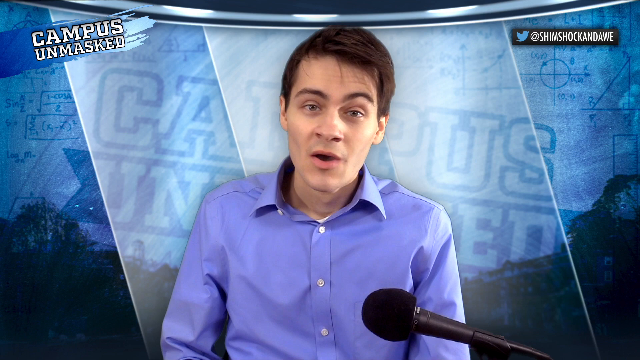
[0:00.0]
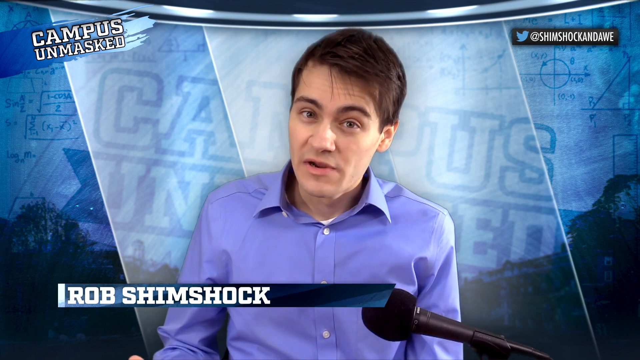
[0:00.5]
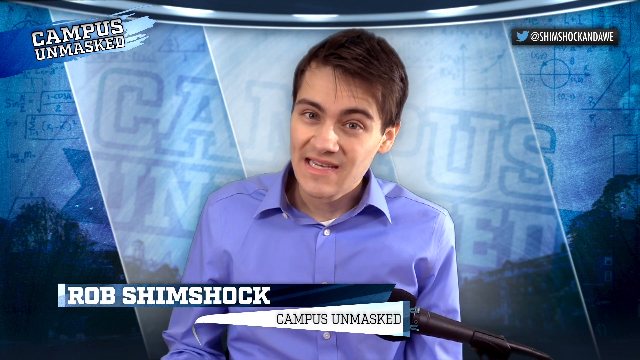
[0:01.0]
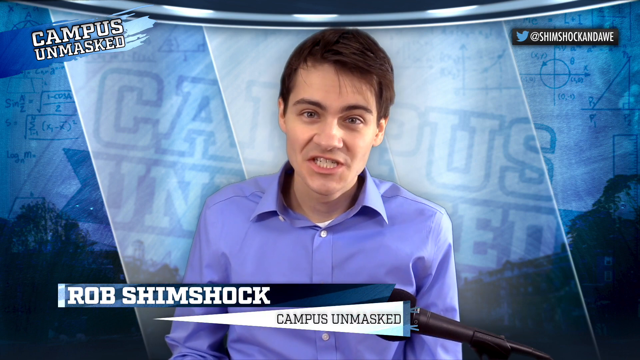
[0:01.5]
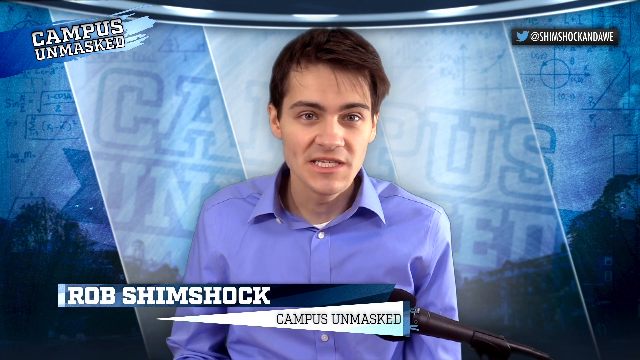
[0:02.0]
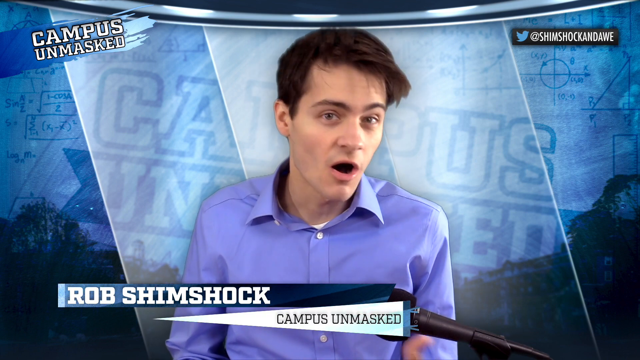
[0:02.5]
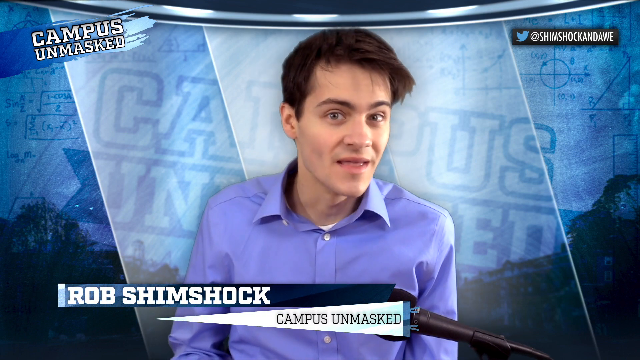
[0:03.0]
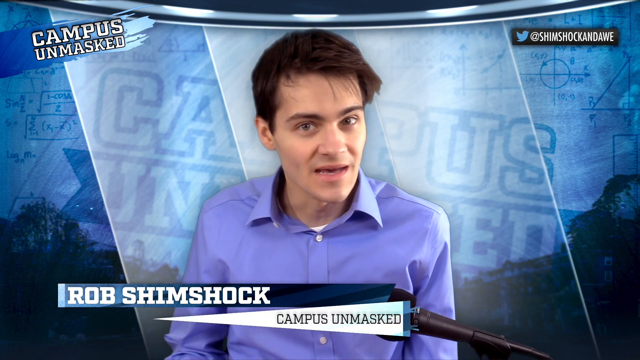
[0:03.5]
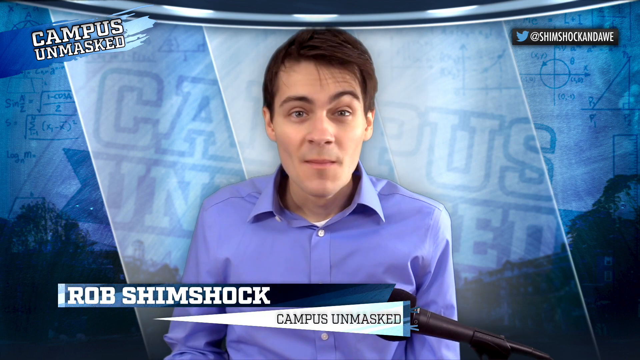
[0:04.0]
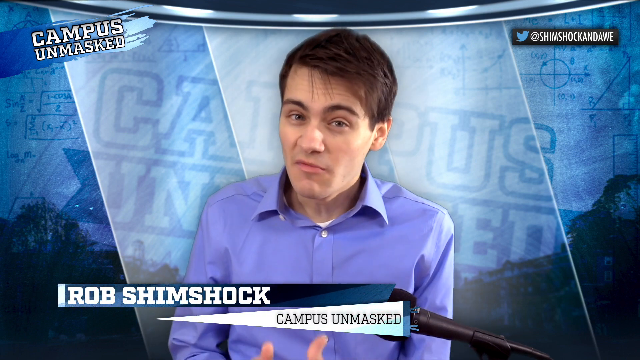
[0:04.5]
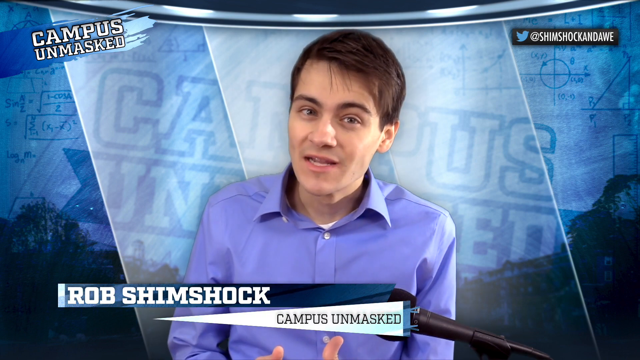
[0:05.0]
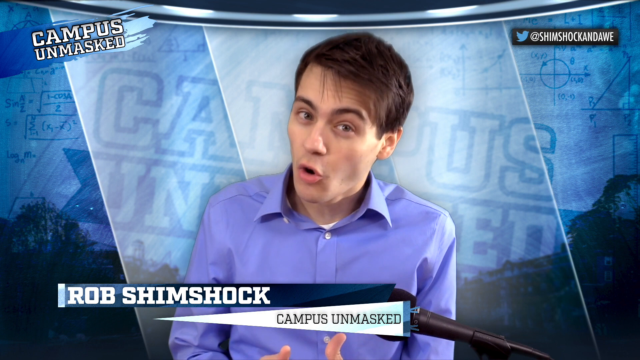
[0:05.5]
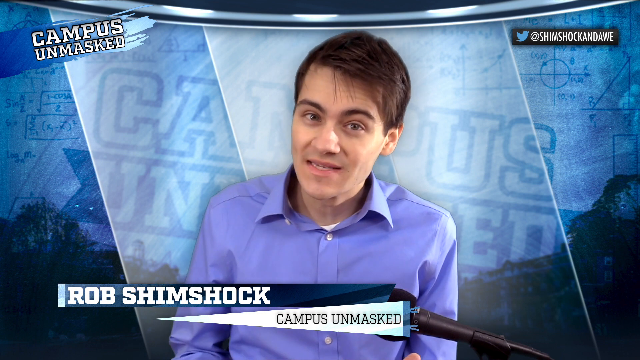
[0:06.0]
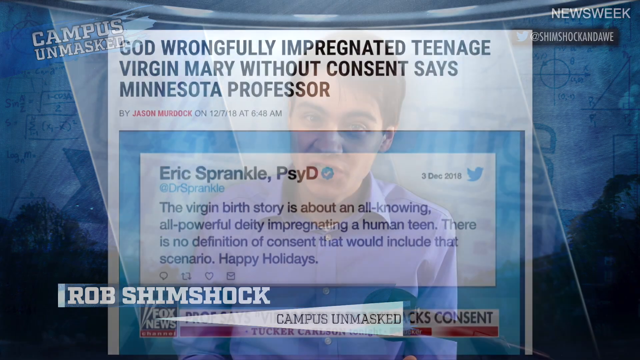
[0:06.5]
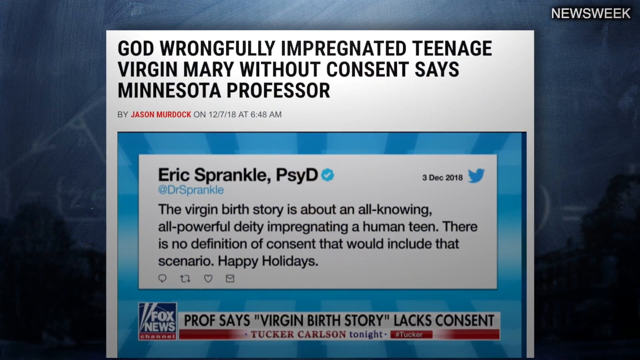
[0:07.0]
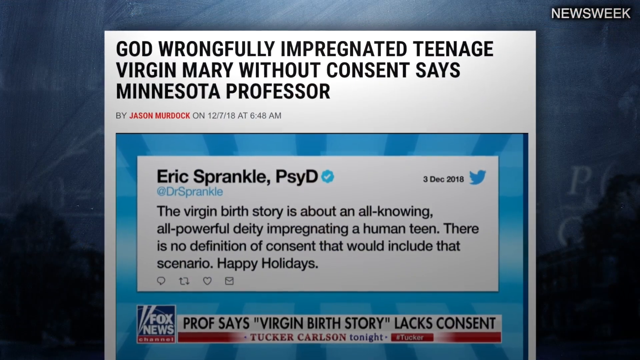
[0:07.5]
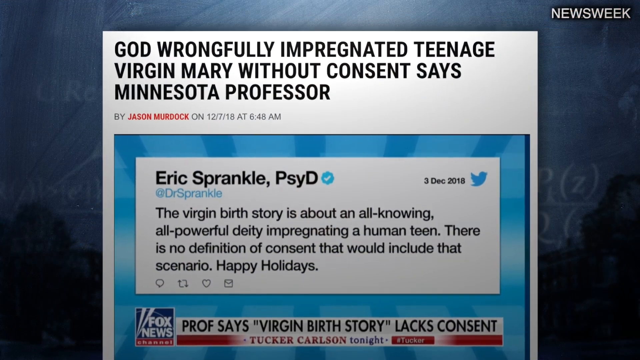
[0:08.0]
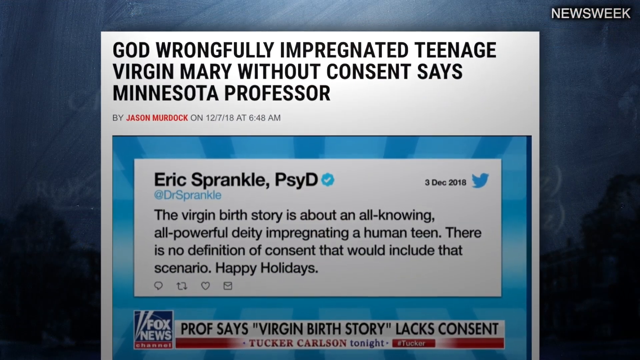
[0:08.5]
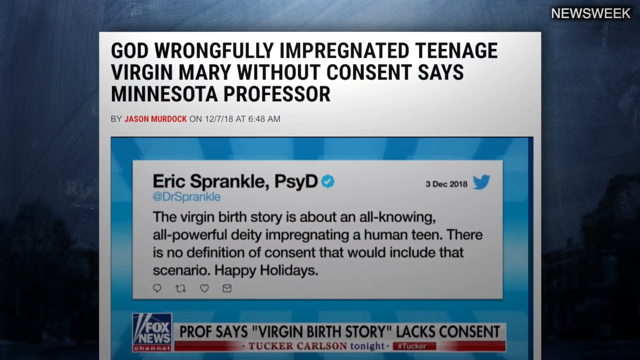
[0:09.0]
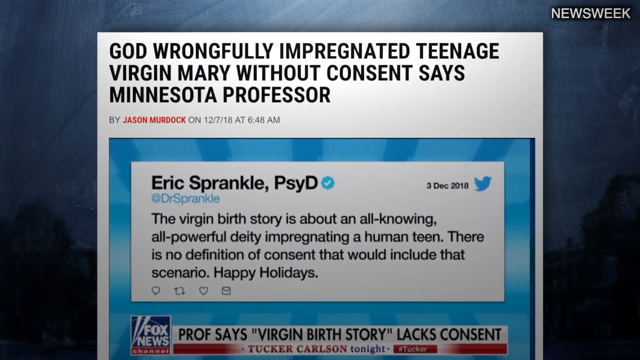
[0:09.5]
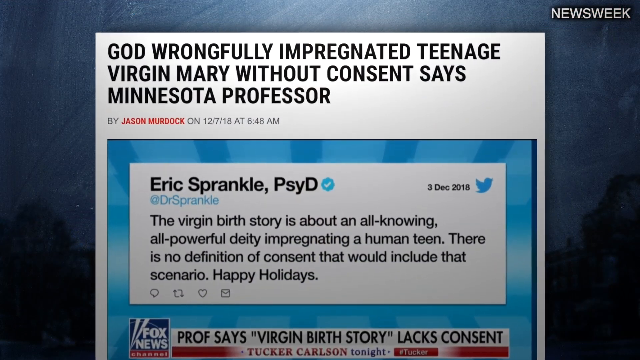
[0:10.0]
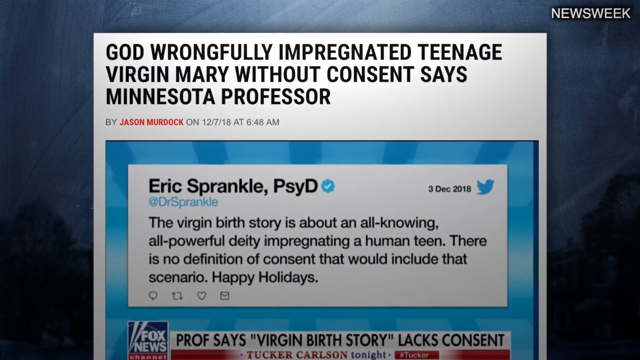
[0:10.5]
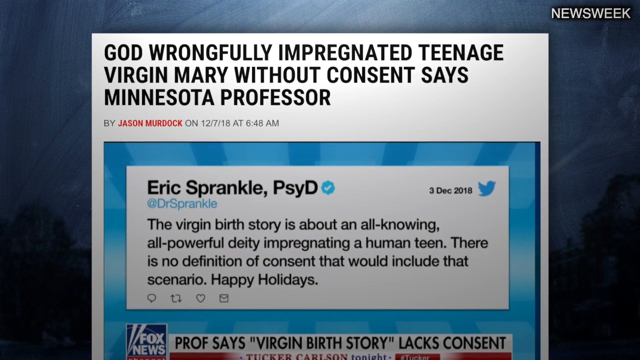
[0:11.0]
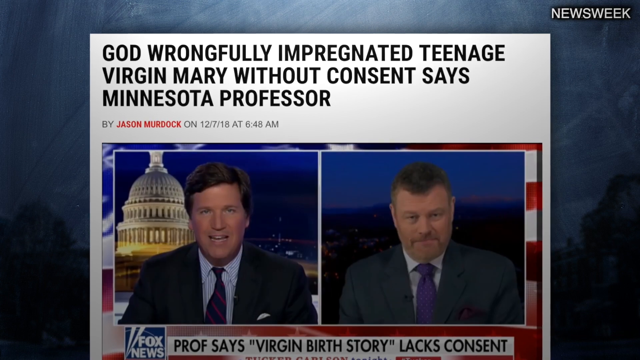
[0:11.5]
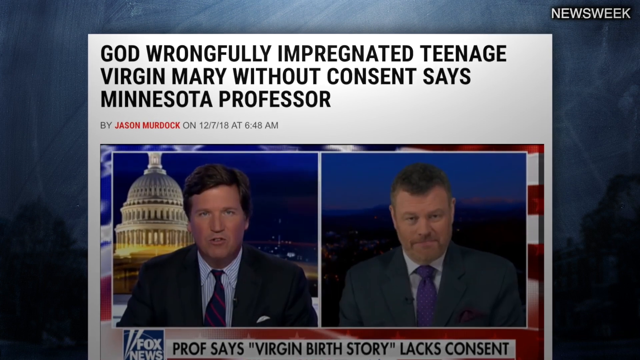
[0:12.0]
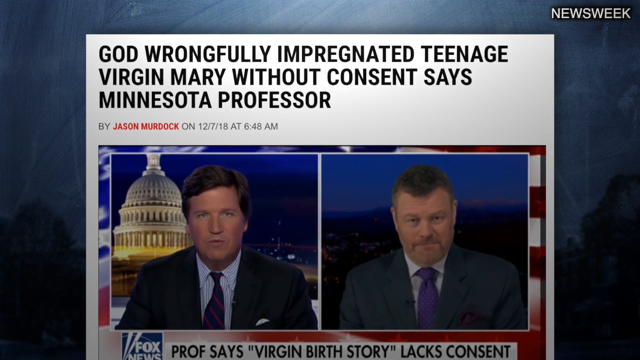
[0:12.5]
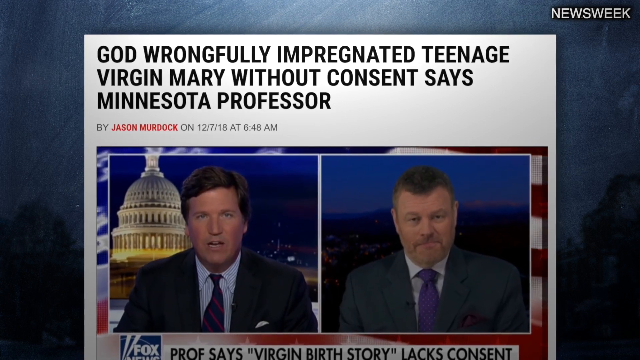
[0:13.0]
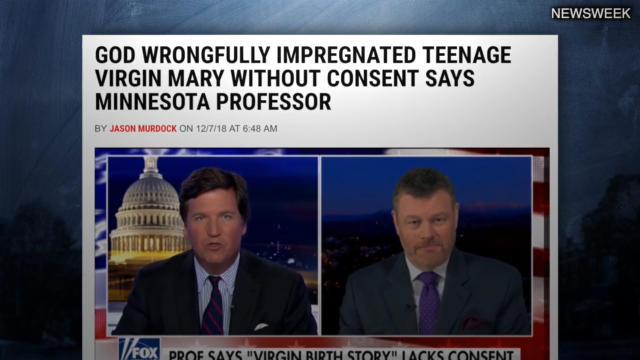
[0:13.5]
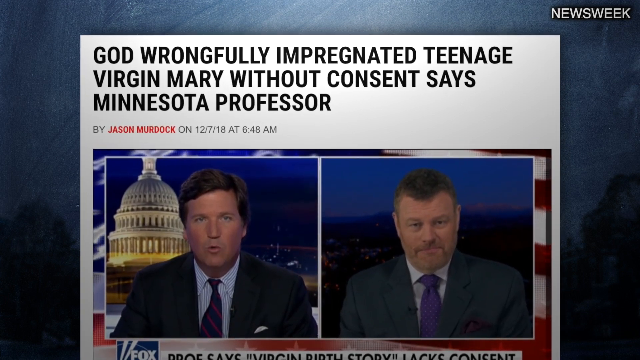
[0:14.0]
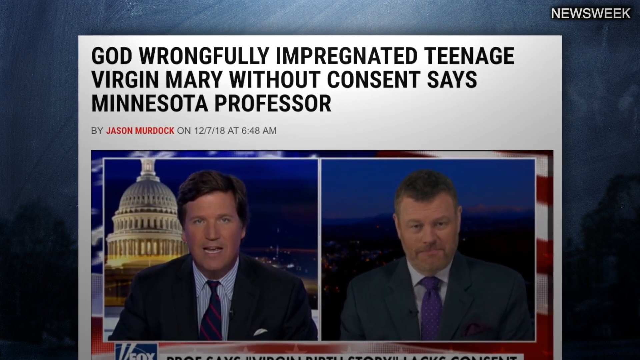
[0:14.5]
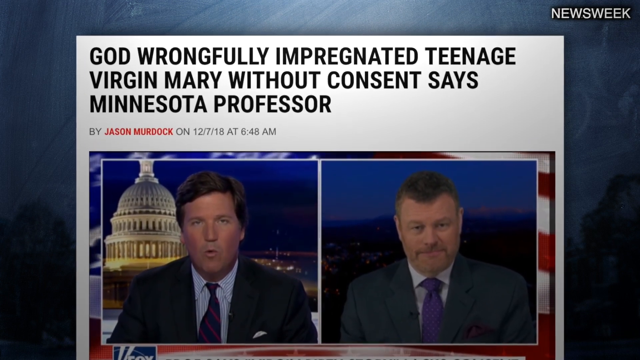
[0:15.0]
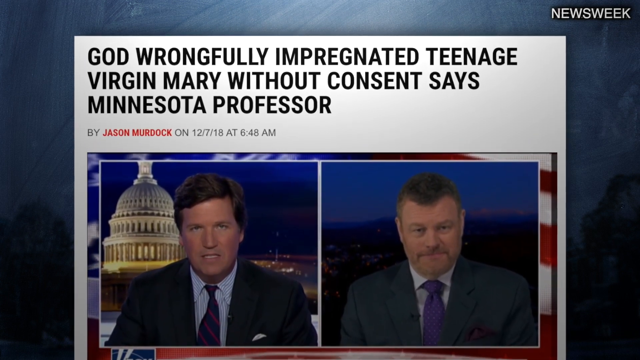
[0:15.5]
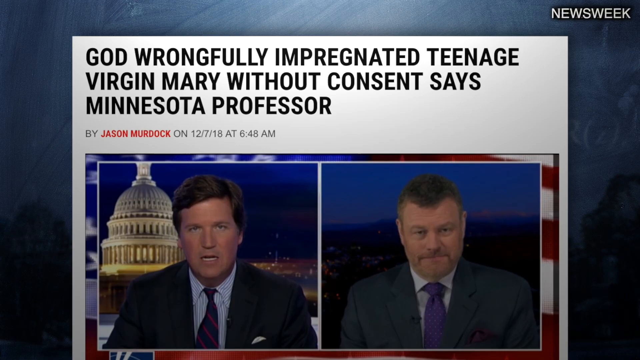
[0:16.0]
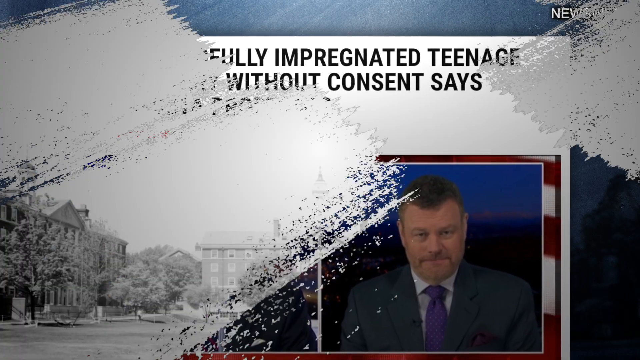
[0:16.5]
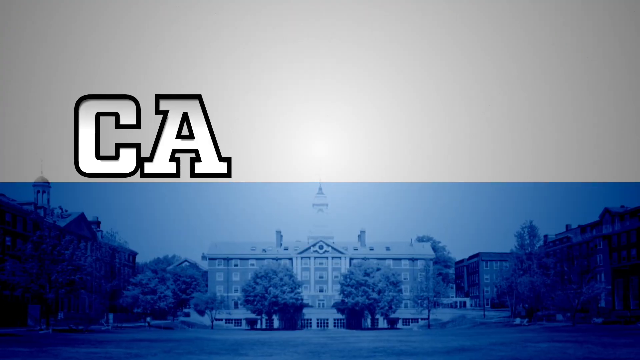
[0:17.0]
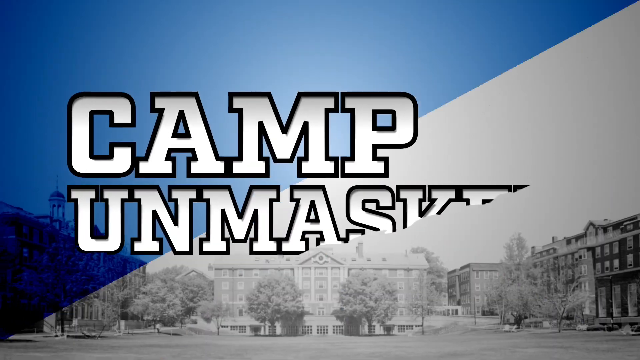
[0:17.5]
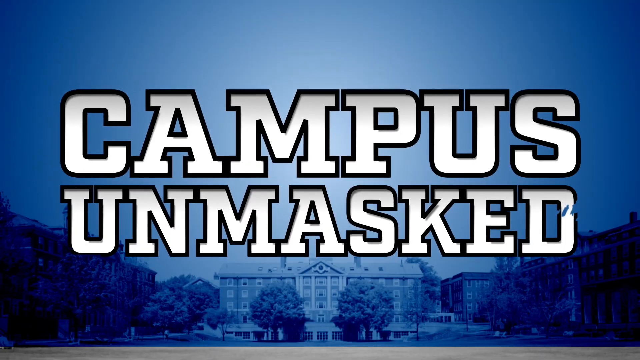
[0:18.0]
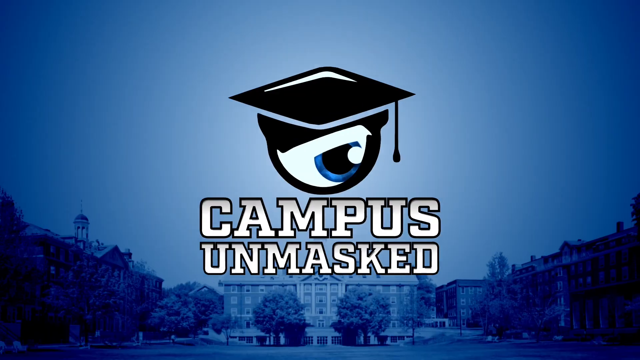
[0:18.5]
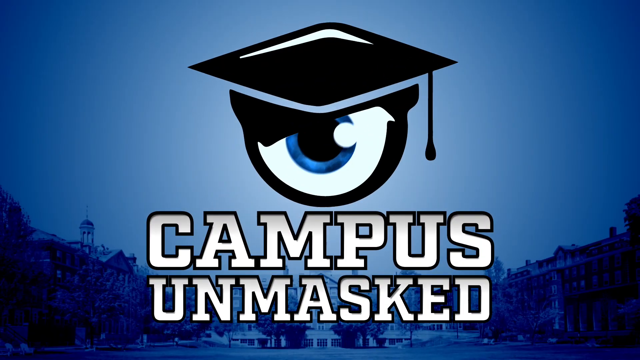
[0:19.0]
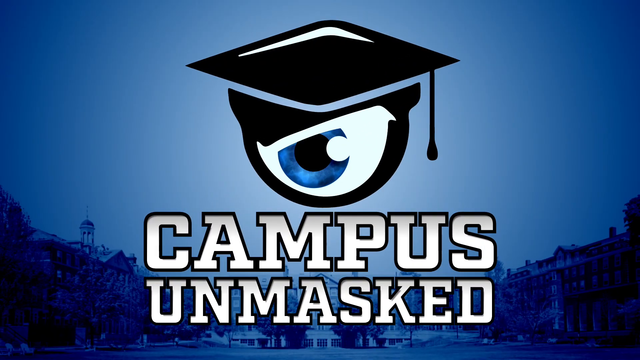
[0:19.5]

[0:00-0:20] The video, Campus Unmasked Shimshock and Awe with Rob Shimshock, is some type of podcast, and Rob Shimshock is in a studio. A news story is shown that says "God wrongfully impregnated teenage virgin Mary without consent says Minnesota professor Eric Sprengle doctorate in psychology," dated December 3, 2018. A tweet reads "the virgin birth story is about an all-knowing all-powerful deity impregnating a human teen there is no definition of consent that would include that scenario happy holidays." This was shown by Fox News, with text saying "professor says virgin birth story lacks consent" by Tucker Carlson. The view focuses in on this, then shows Tucker Carlson talking to another, unidentified person on the right. The video then returns to Campus Unmasked and Rob Shimshock.